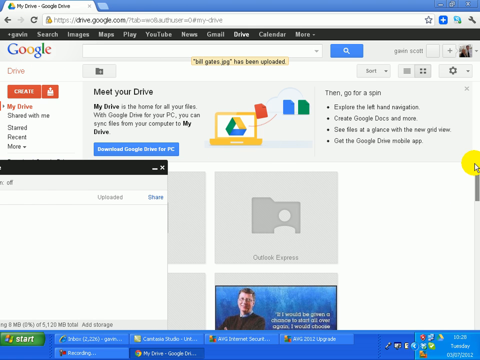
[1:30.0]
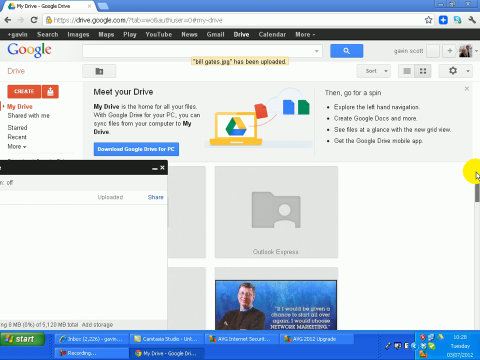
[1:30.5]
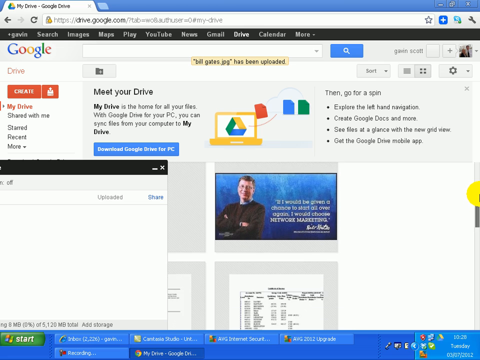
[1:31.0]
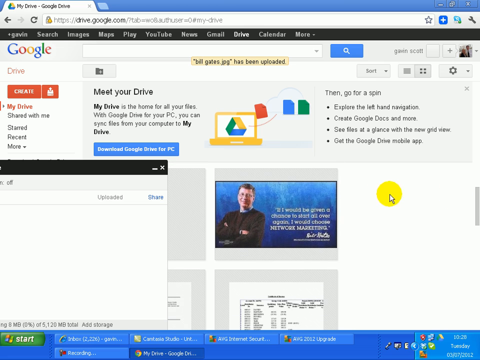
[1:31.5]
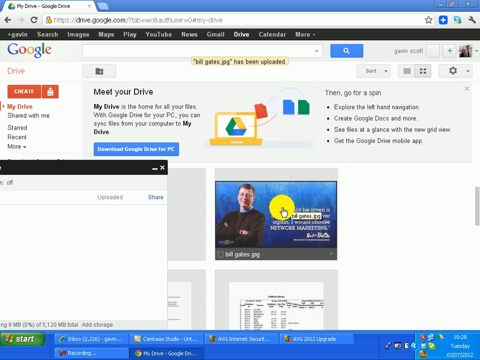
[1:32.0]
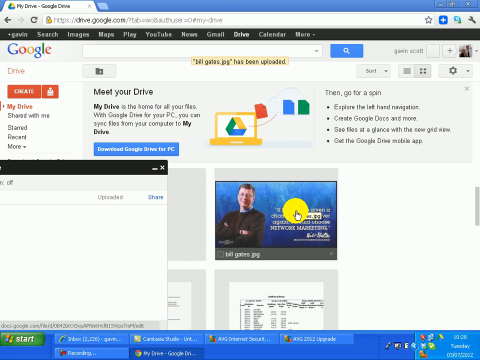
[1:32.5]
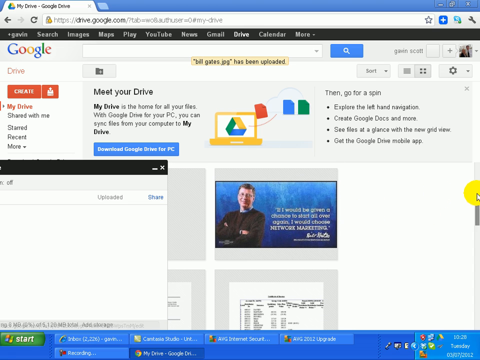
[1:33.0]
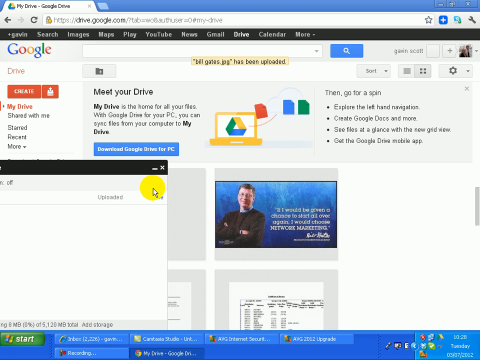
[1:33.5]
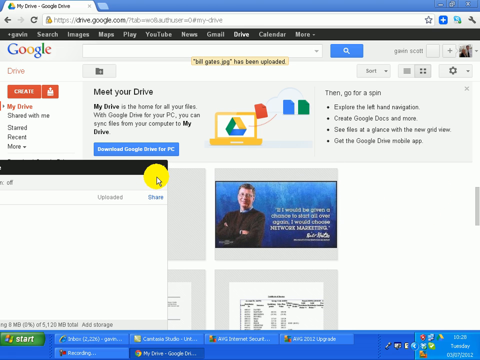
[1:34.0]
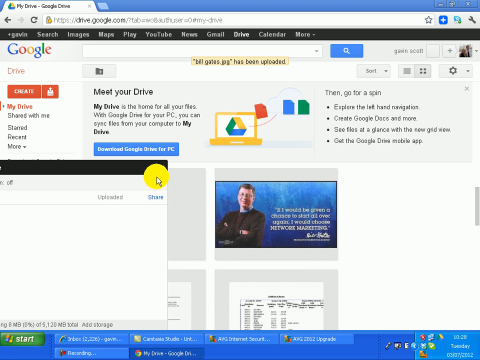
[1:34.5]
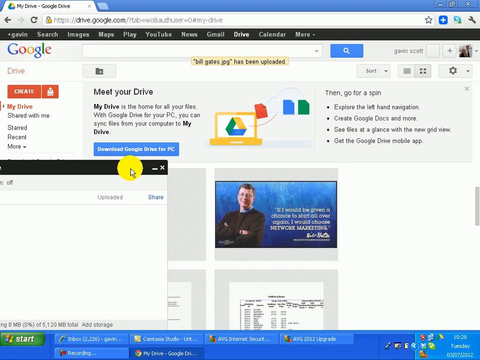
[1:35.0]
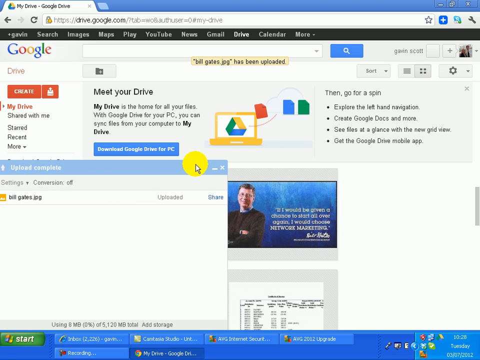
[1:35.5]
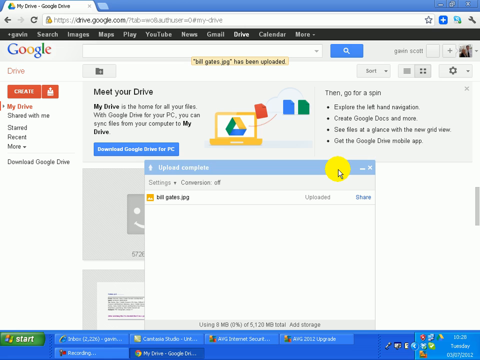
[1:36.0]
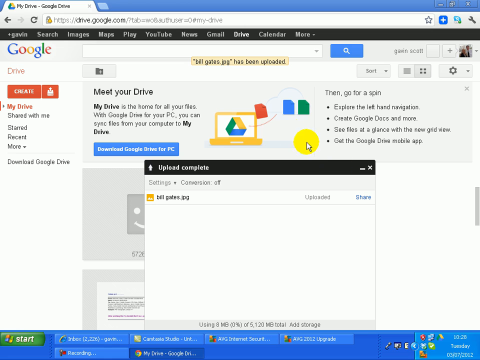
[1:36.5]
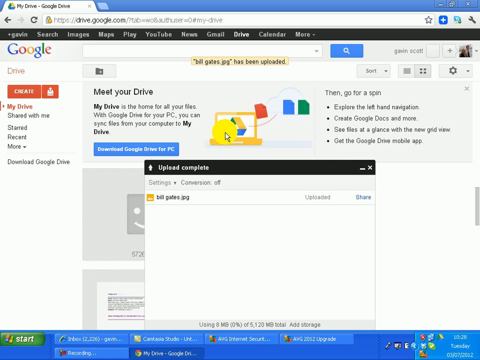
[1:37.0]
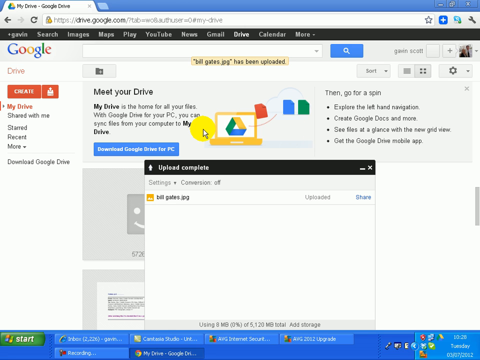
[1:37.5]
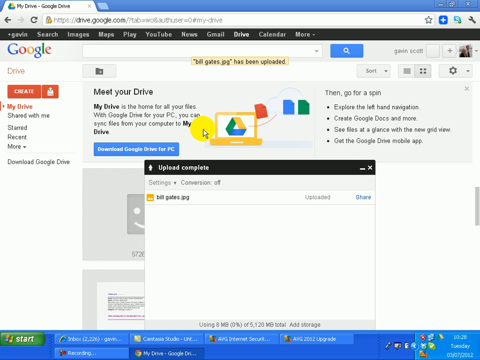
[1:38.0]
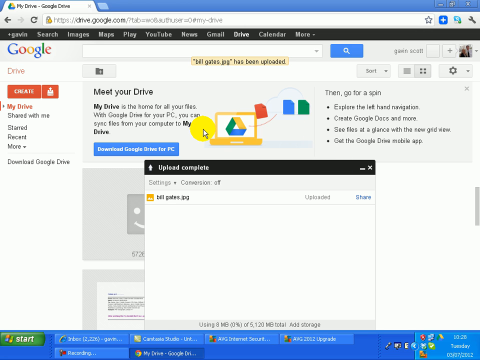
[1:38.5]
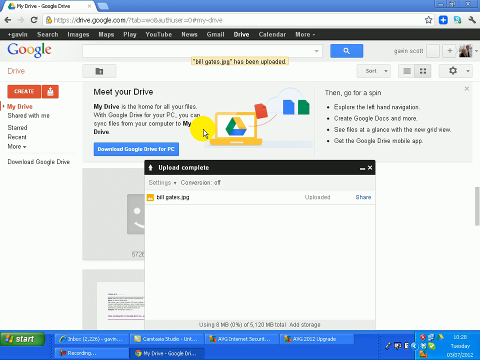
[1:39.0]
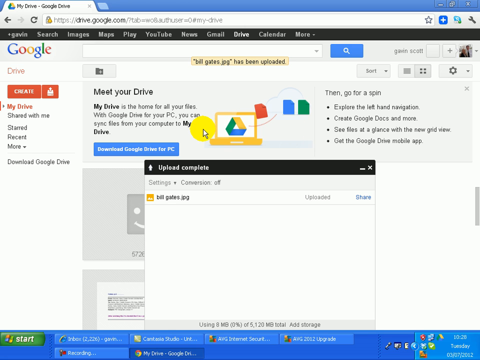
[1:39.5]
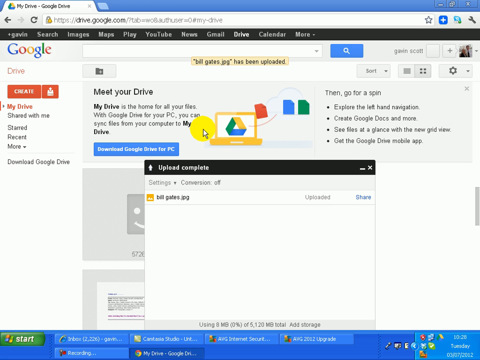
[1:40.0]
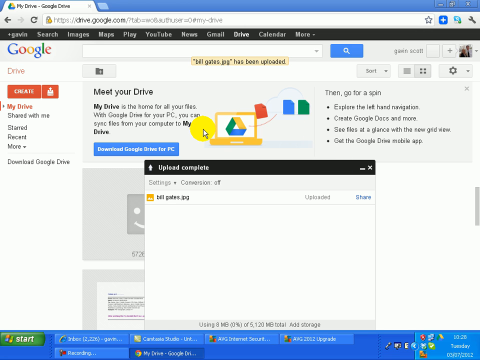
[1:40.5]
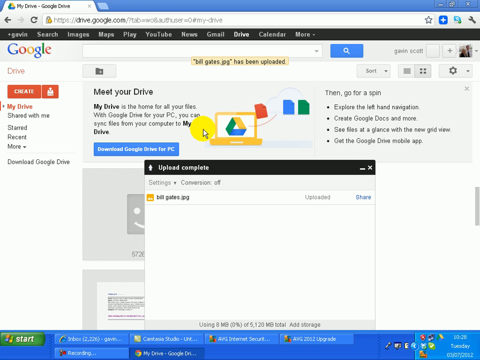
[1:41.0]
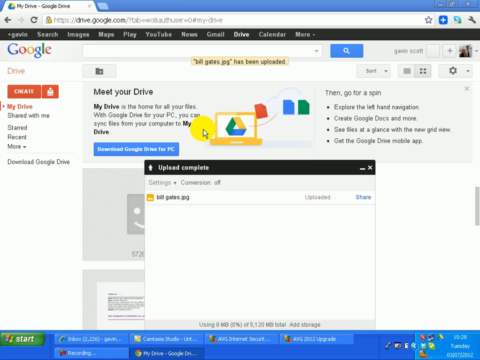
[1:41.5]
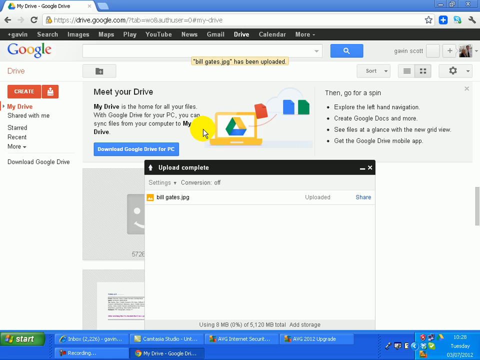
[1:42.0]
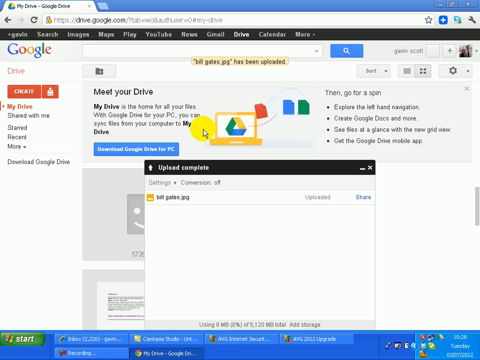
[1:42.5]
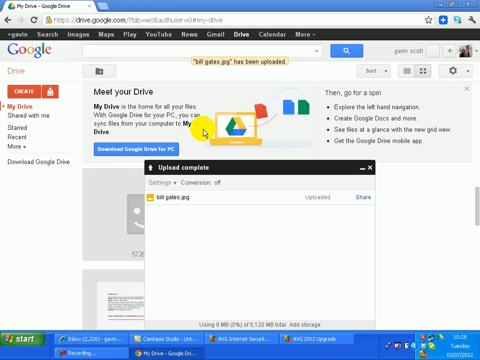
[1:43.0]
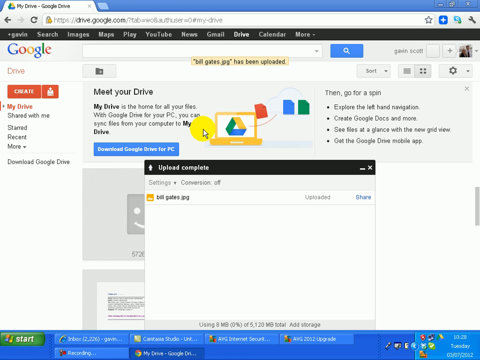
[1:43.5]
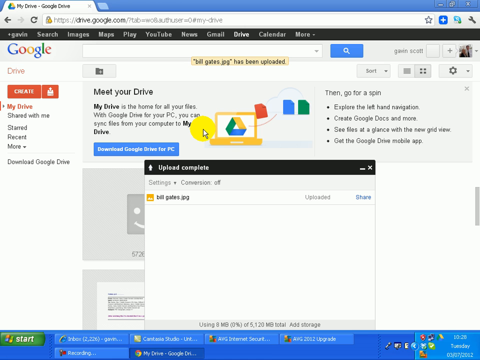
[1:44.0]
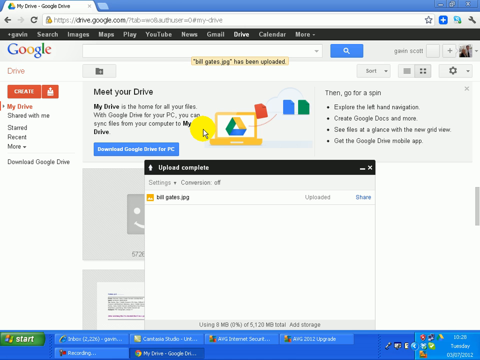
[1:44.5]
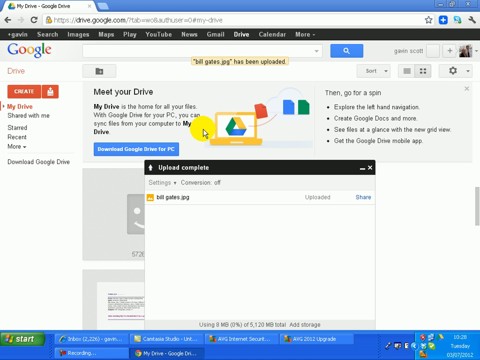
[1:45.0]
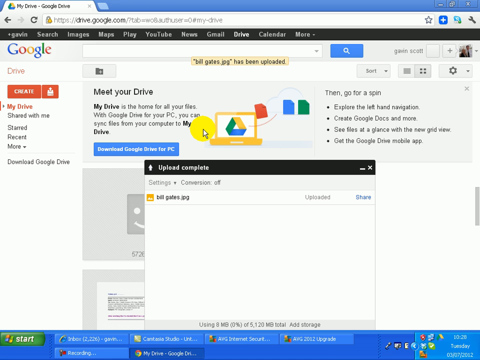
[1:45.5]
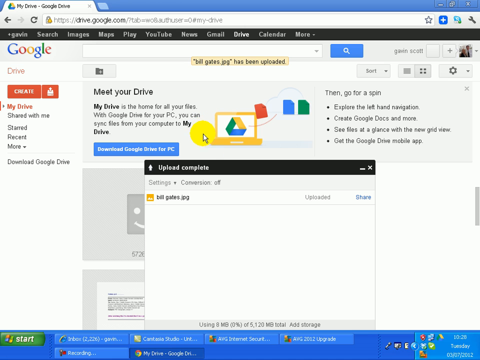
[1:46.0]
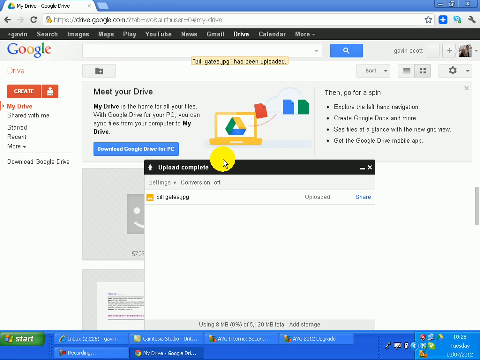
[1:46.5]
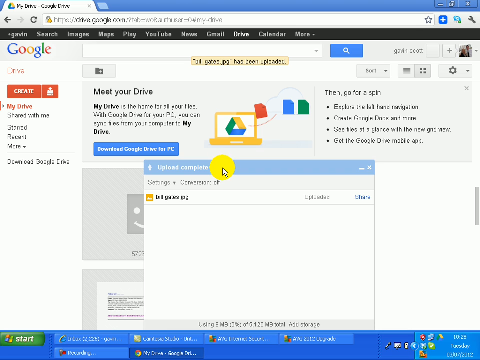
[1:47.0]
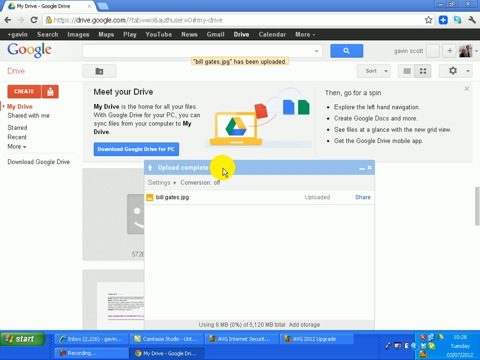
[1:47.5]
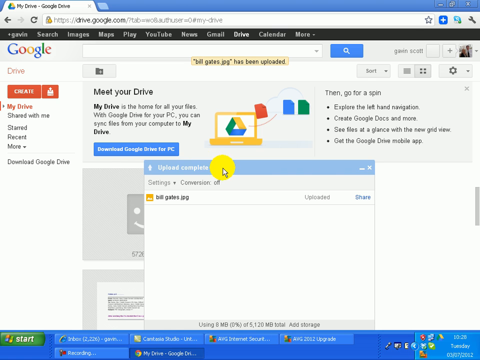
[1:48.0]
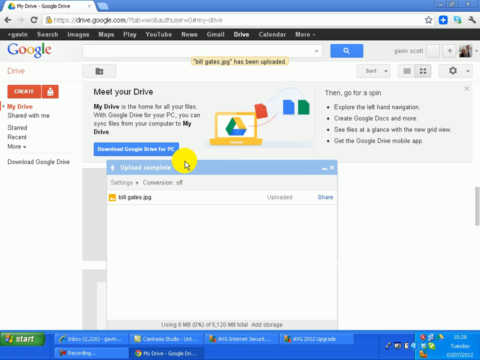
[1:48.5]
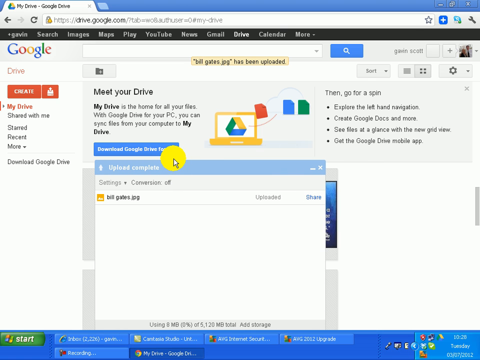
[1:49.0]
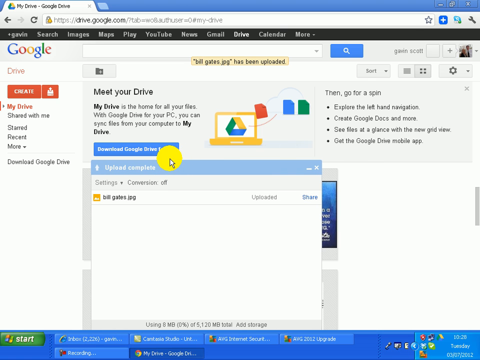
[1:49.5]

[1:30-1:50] A picture of a man with his arms folded, wearing a black shirt, is on the screen, along with the text "upload complete". The yellow cursor highlight barely moves as the man moves the tab to the left. The screen seems to move down a little, since the picture of the man is now lower.